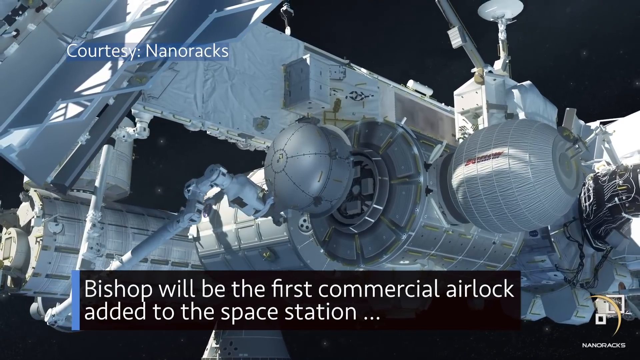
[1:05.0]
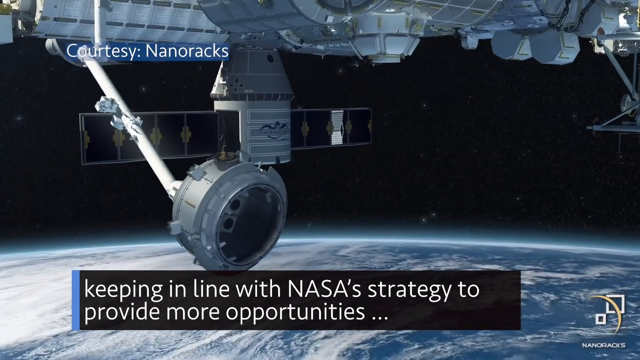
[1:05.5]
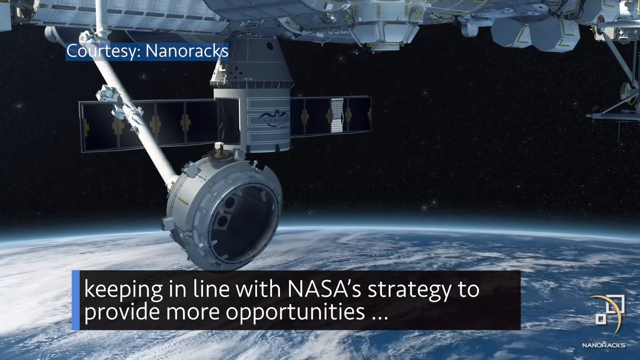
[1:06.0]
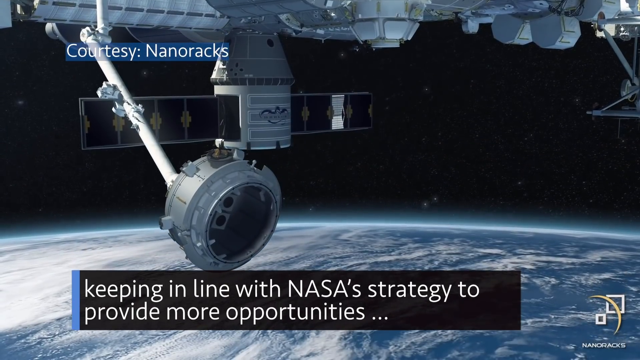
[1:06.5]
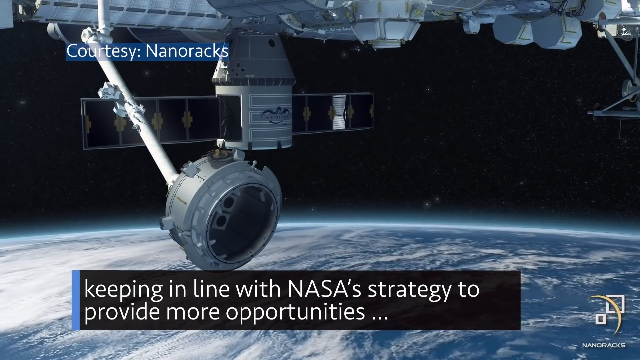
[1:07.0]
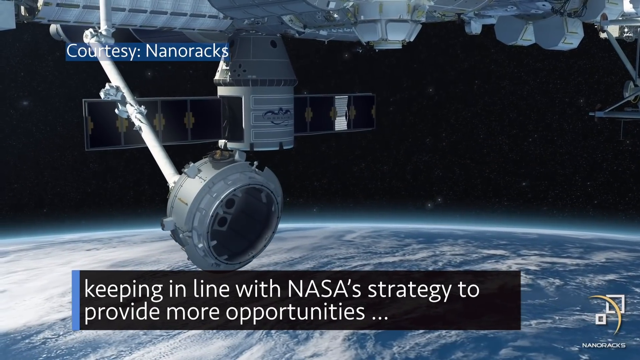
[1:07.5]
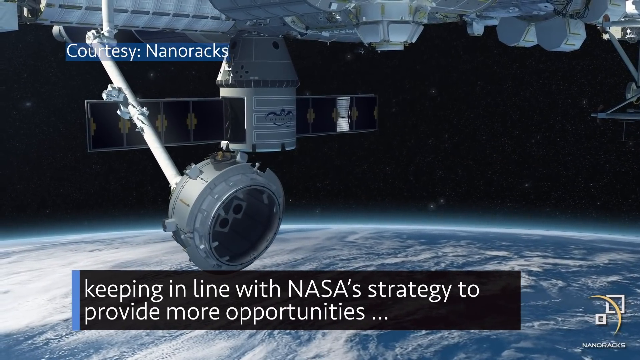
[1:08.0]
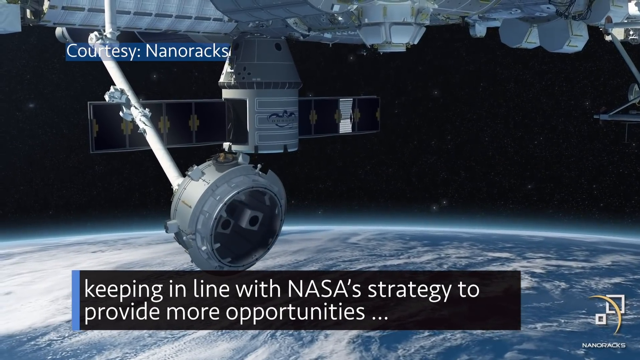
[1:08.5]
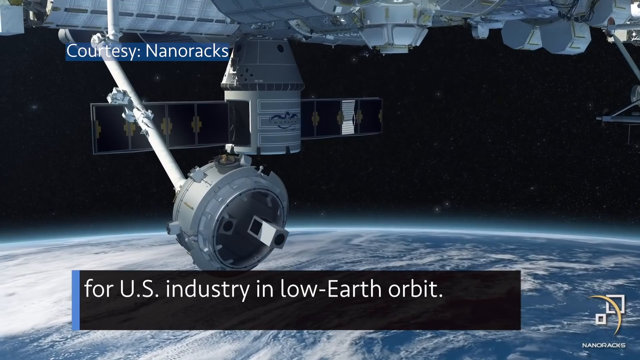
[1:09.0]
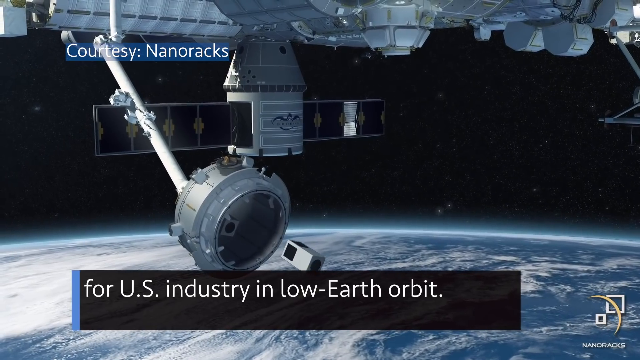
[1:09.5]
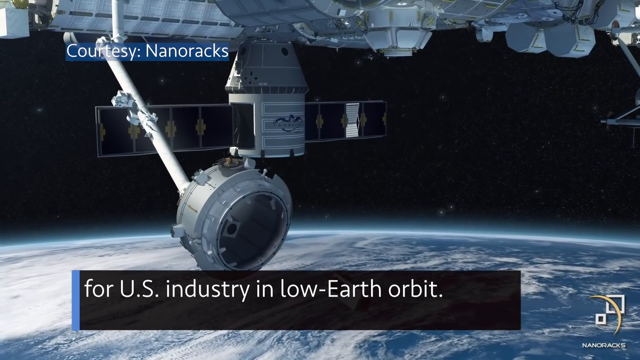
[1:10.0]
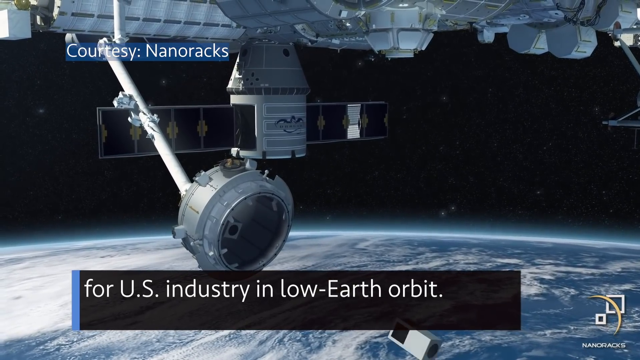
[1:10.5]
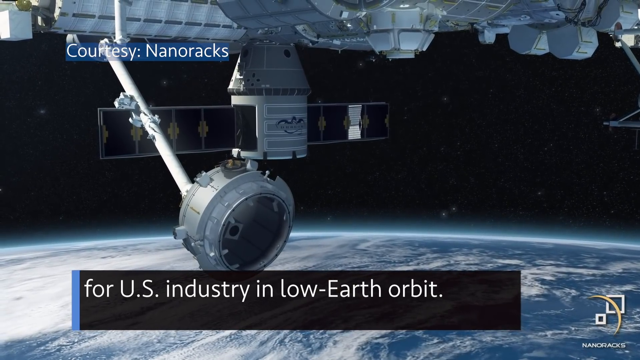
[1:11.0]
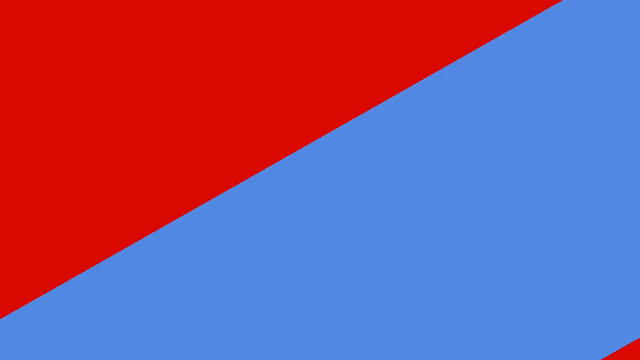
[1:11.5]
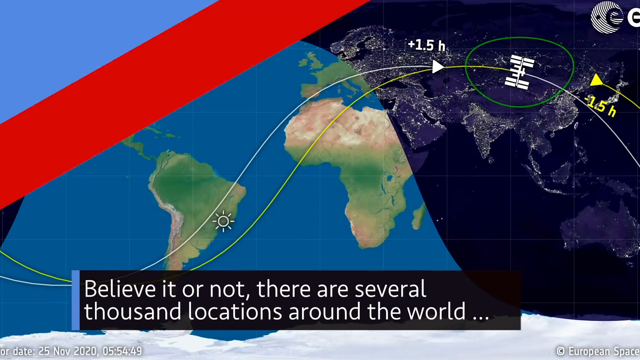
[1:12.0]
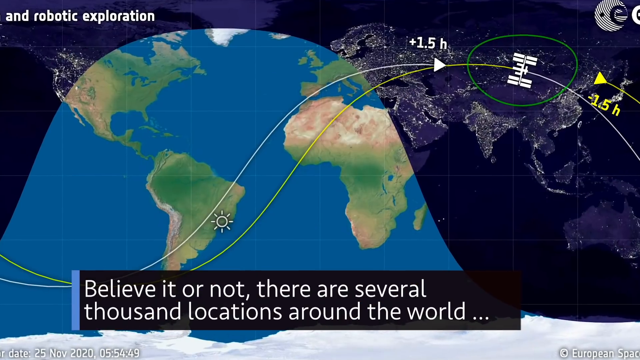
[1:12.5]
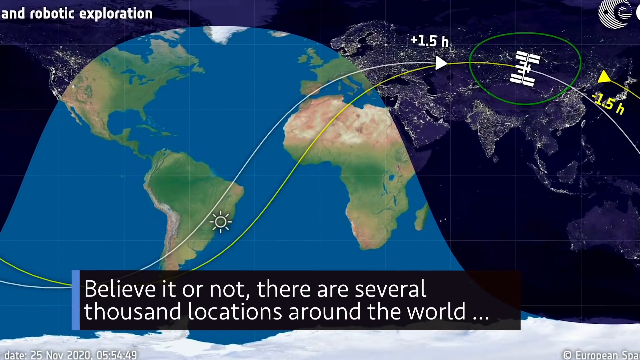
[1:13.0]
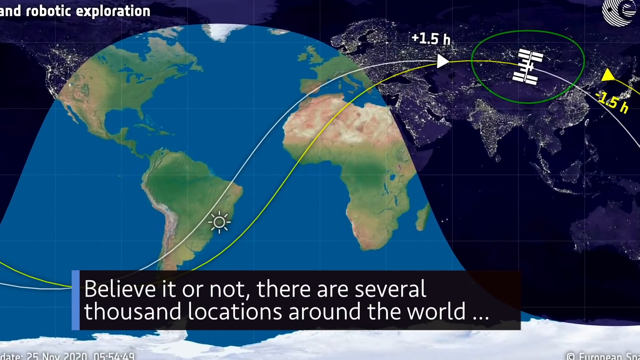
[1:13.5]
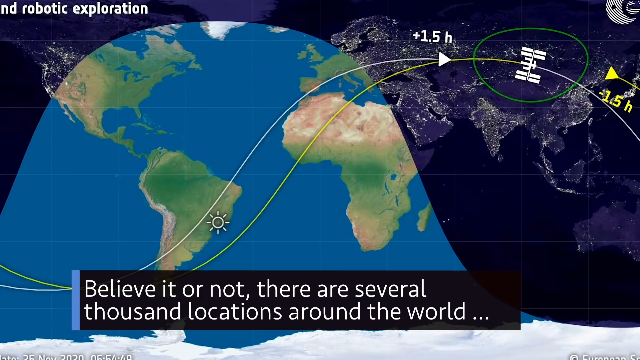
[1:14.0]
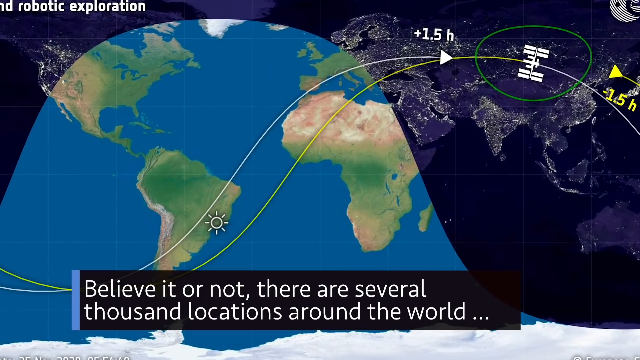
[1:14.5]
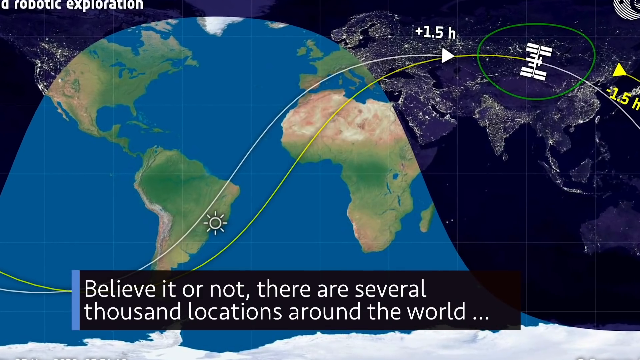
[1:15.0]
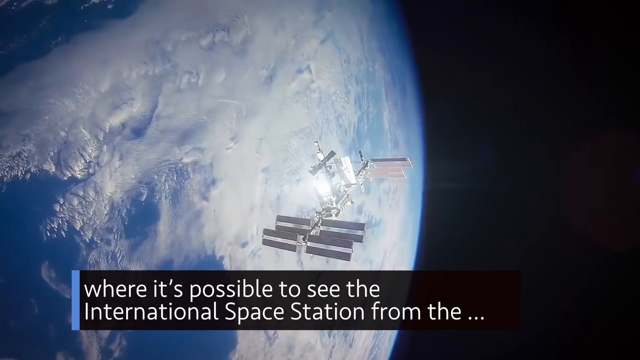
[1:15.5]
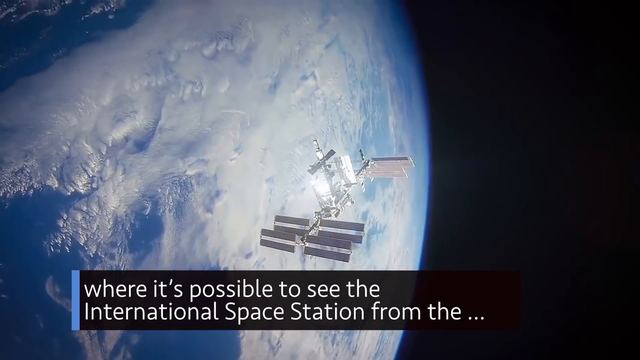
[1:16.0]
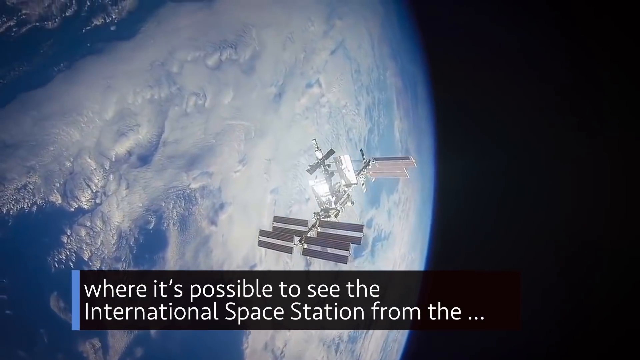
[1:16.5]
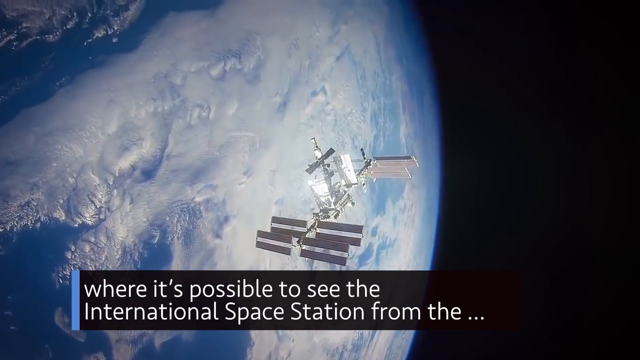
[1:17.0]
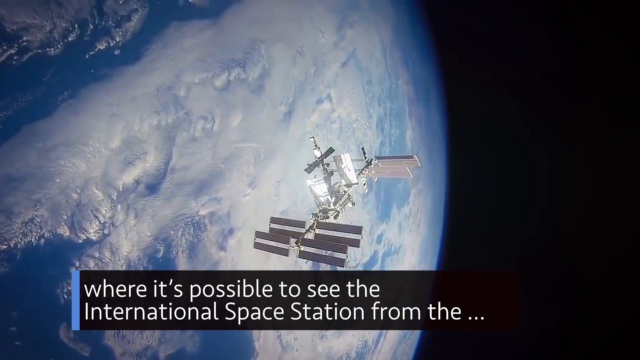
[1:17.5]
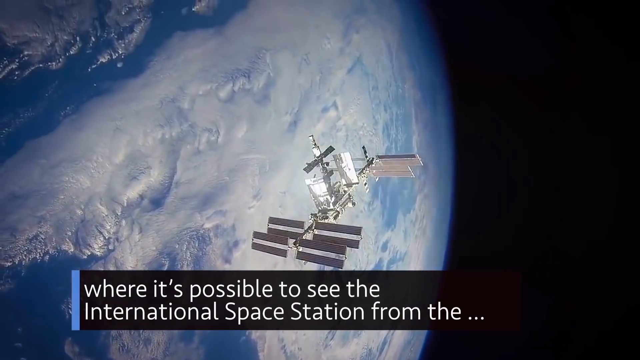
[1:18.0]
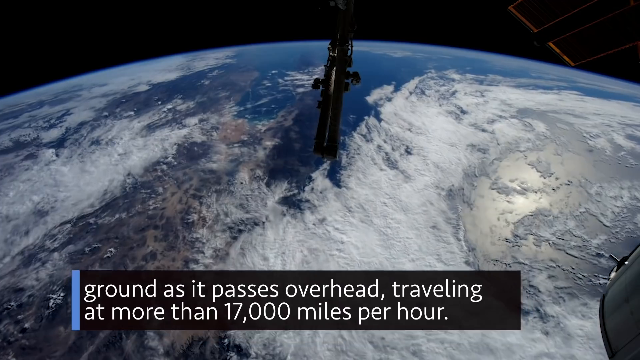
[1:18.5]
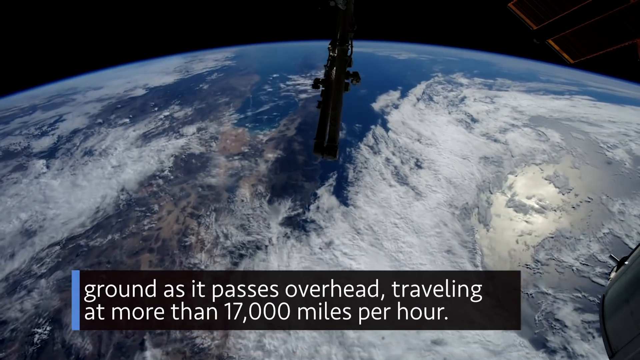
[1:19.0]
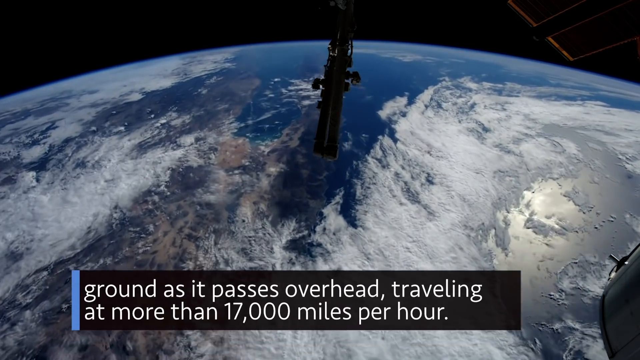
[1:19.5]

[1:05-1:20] A picture of the space station shows some small thing coming out of the airlock. The red and blue graphic crosses over the screen again, and a map shows the space station's line of flight and the countries it passes over. The space station is then seen from afar in space, and then flying overhead.